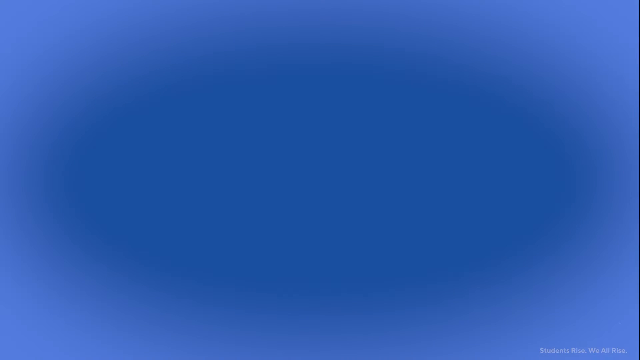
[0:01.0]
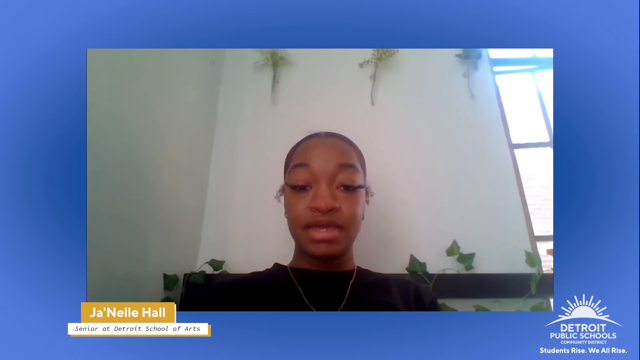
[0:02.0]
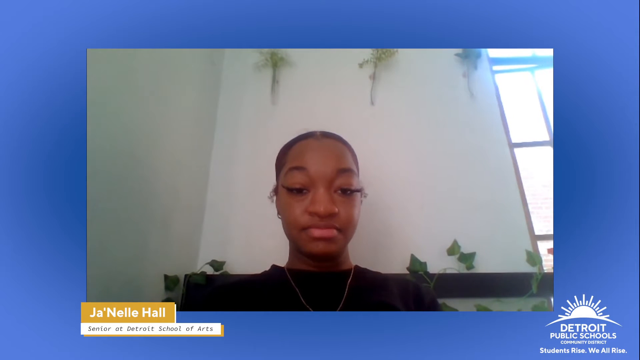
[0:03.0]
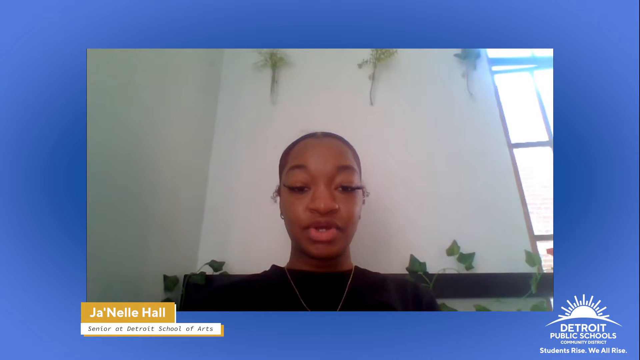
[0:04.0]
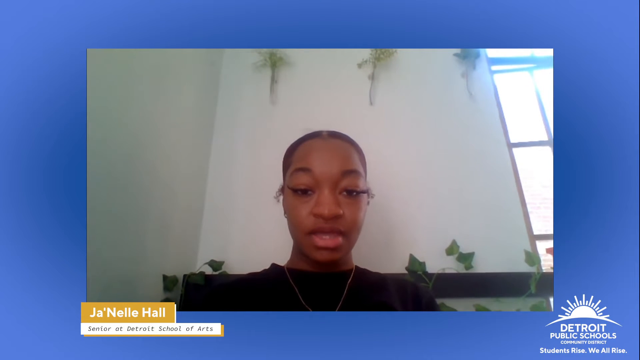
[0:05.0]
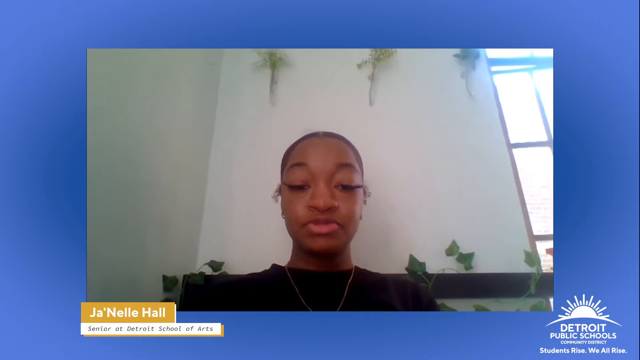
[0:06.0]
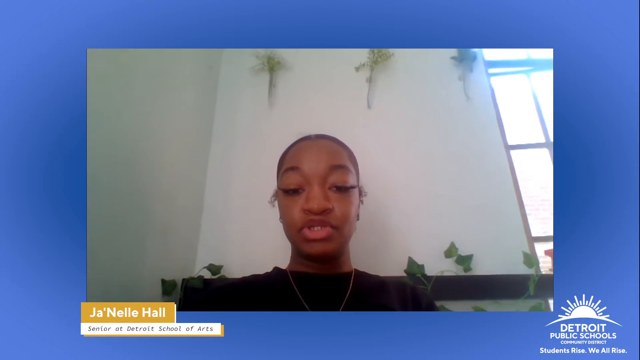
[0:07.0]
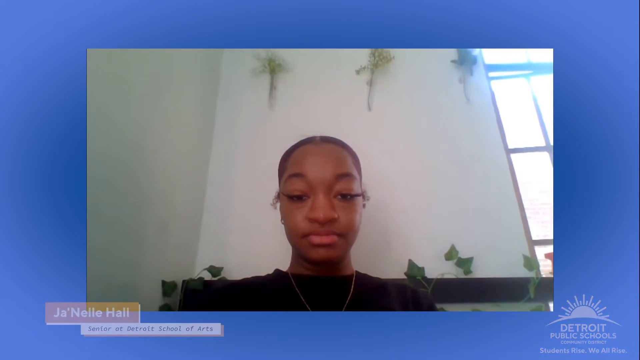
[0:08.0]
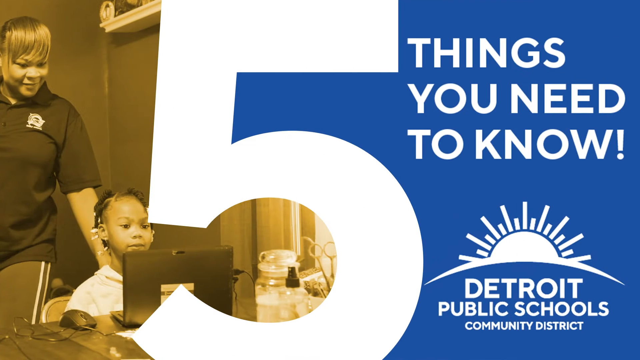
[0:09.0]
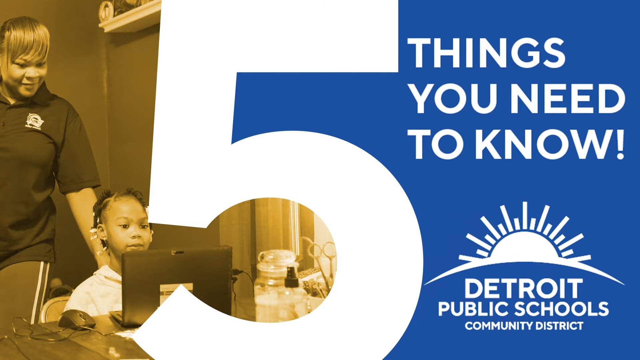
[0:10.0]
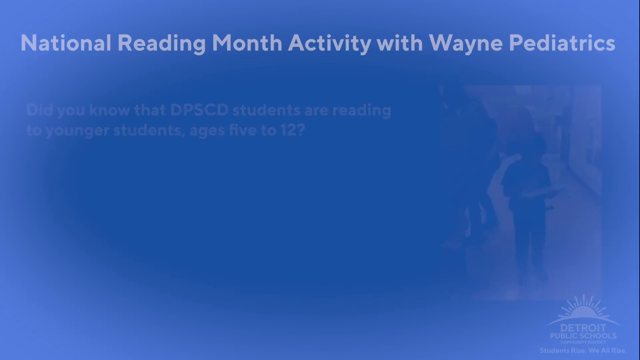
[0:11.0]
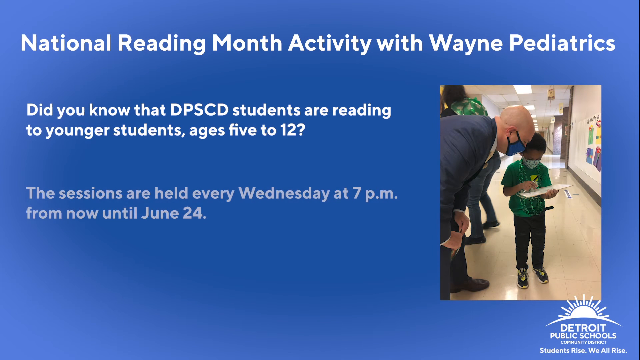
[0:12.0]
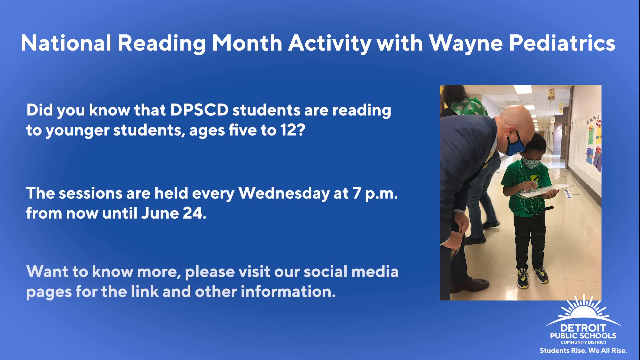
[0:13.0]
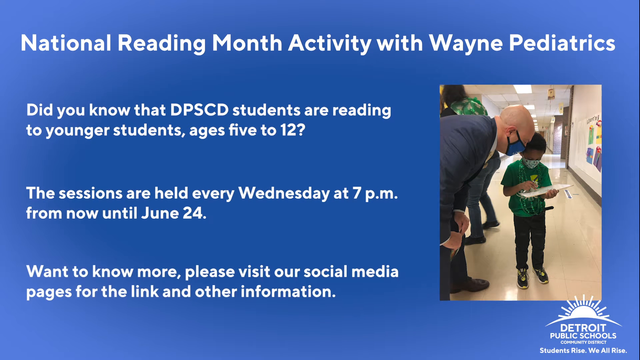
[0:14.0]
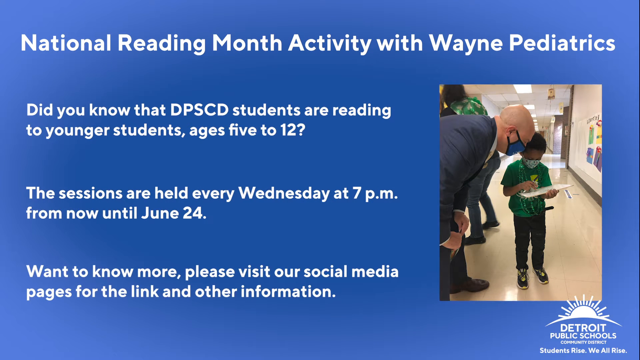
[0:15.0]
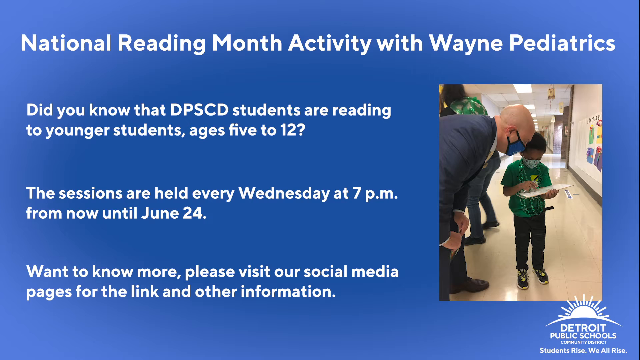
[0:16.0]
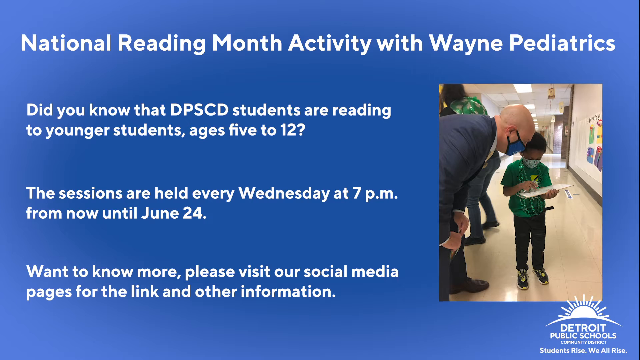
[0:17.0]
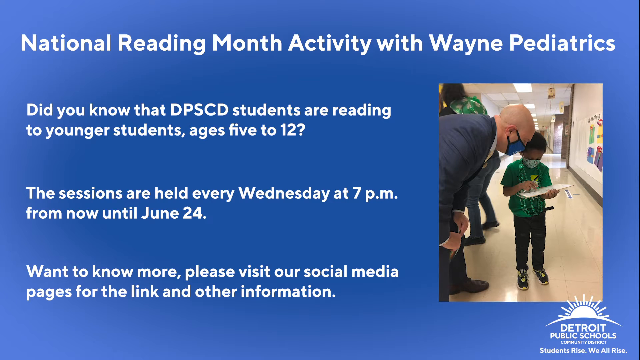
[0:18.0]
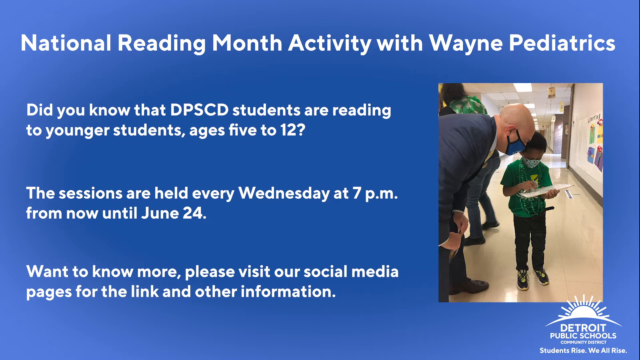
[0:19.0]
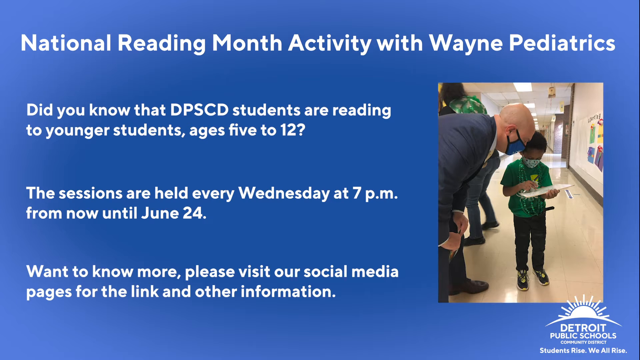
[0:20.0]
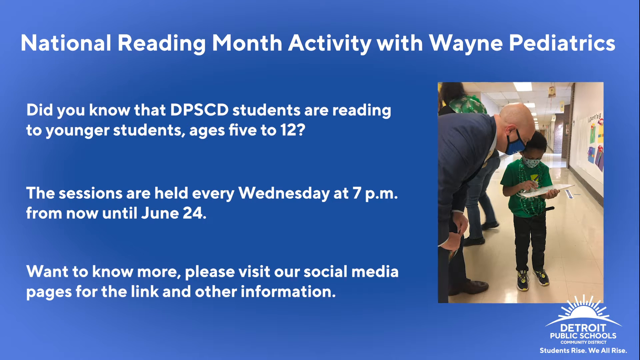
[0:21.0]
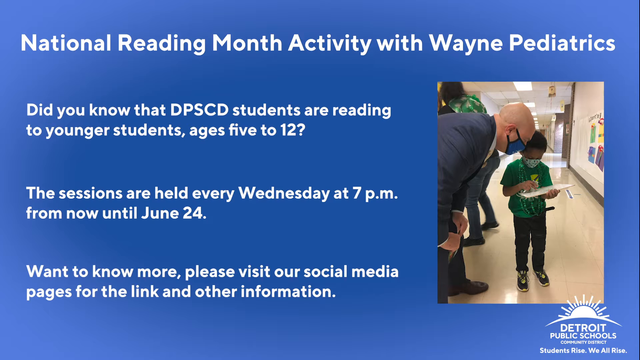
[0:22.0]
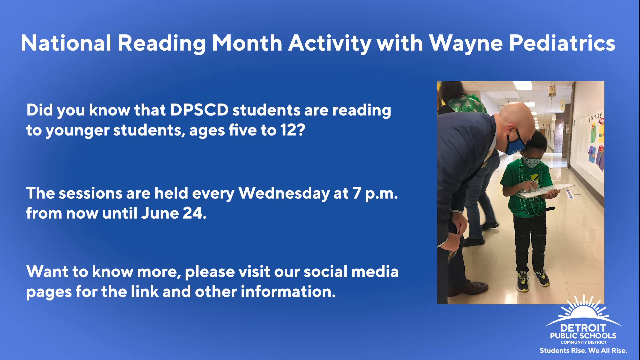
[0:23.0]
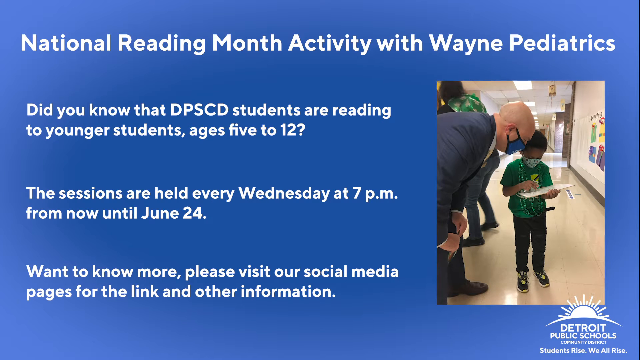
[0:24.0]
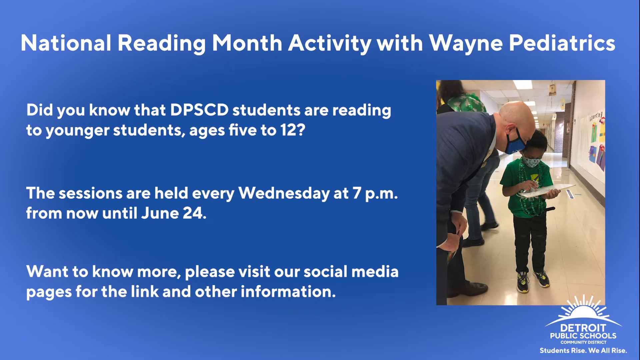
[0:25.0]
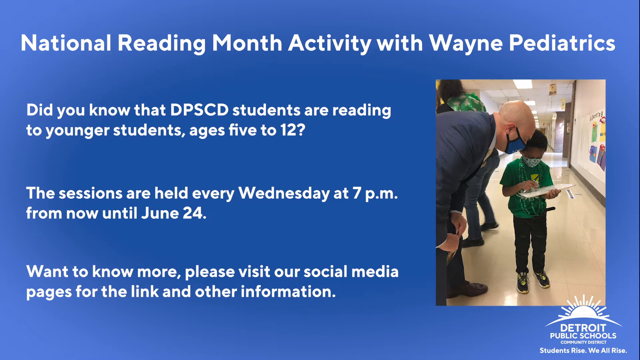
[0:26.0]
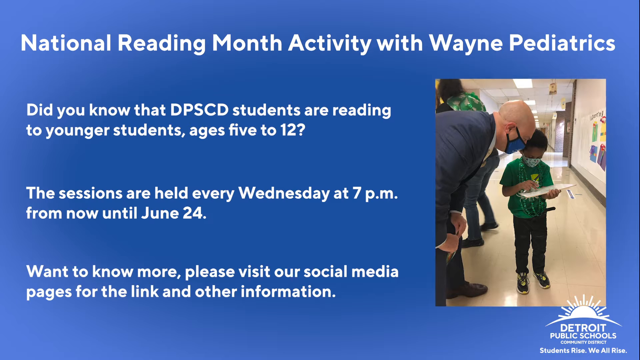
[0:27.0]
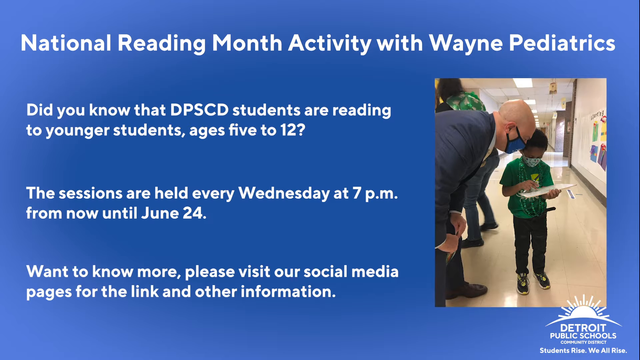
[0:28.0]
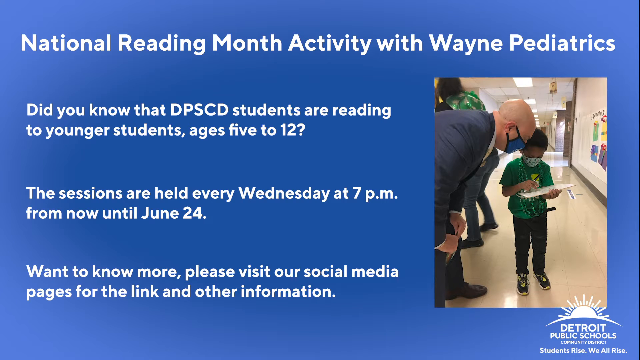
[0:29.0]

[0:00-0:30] An African American woman appears against a blue background, and it looks like she is taking a video of herself. In the bottom left corner, inside a little yellow box, is what appears to be her name, "Janelle Hall," and below that it states she is a senior at Detroit School of Arts. In the bottom right is a sunshine logo that says "Detroit." The video then switches to another blue background with a white number 5 in the center. To the left, split by the 5, is a photo of a lady and a very young girl. On the right, in white on the blue background, is "things you need to know," and below that the sunshine logo with "Detroit Public Schools Community District." The screen then switches to a blue background with a picture on the right-hand side of a man dressed in a suit and a little boy wearing a green shirt. Both wear masks, and the man is peering down at something the little boy is showing him. The text reads "National Reading Month Activity with Wayne Pediatrics. Did you know that DPSCD students are reading to younger students ages 5 to 12? The sessions are held every Wednesday at 7pm from now until June 24th. We want to know more. Please visit our social media pages for the link and other information." This screen stays up for several more seconds.